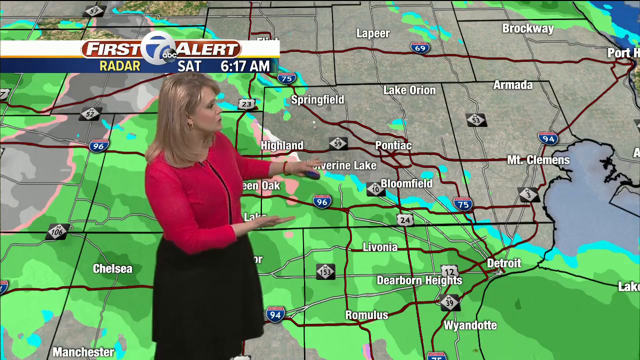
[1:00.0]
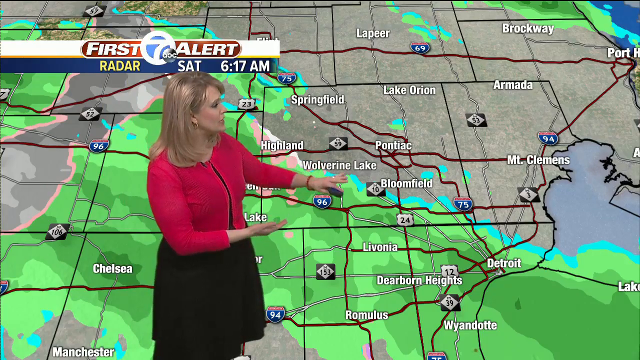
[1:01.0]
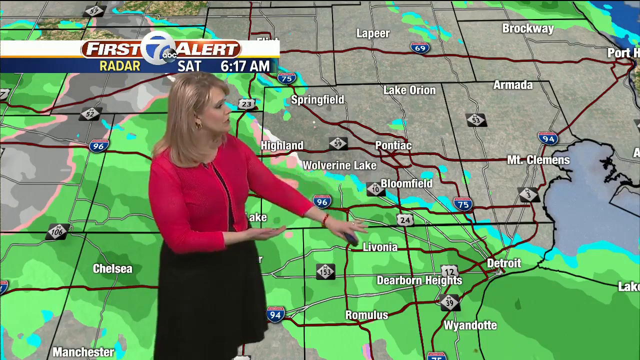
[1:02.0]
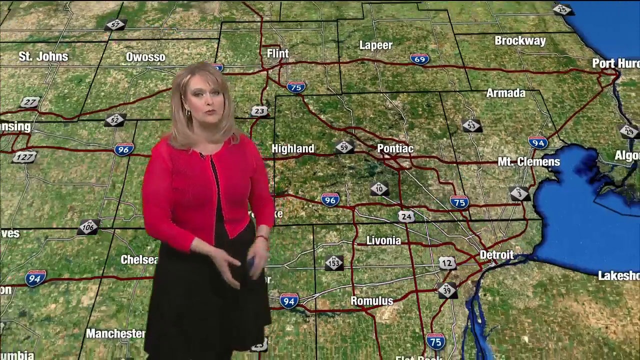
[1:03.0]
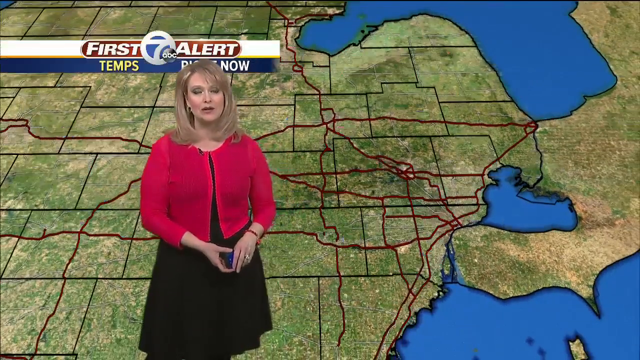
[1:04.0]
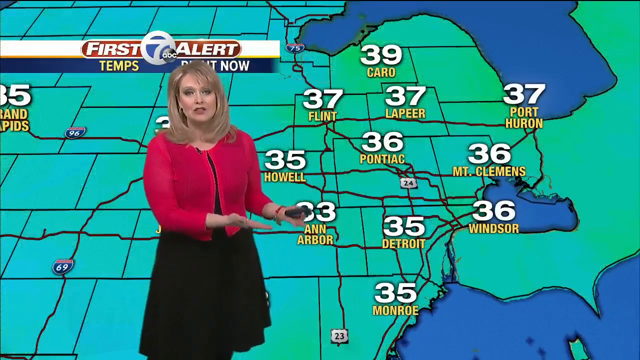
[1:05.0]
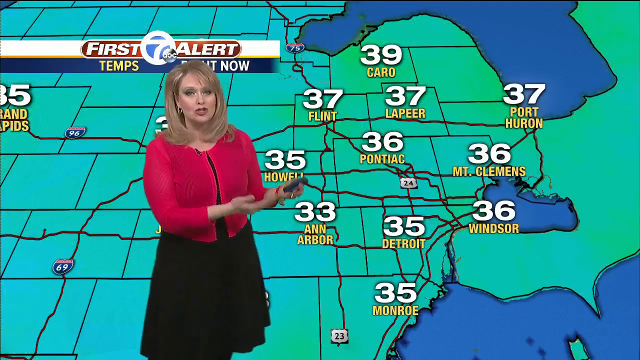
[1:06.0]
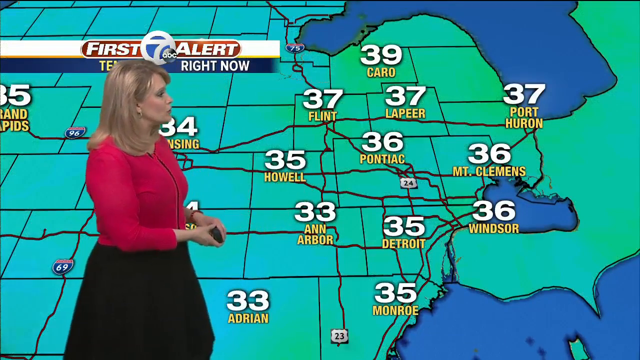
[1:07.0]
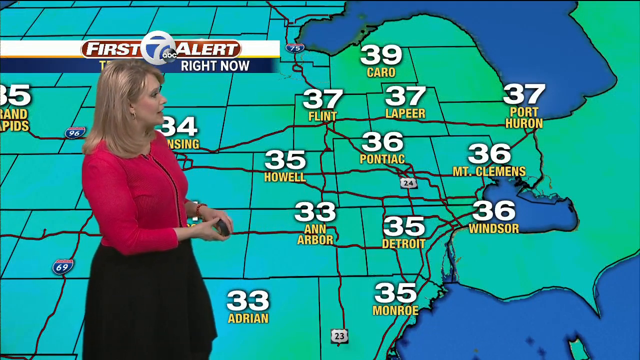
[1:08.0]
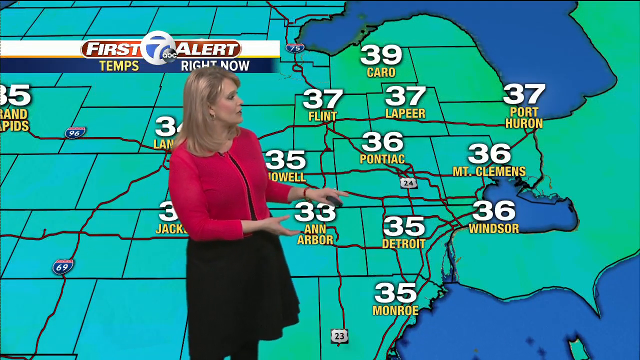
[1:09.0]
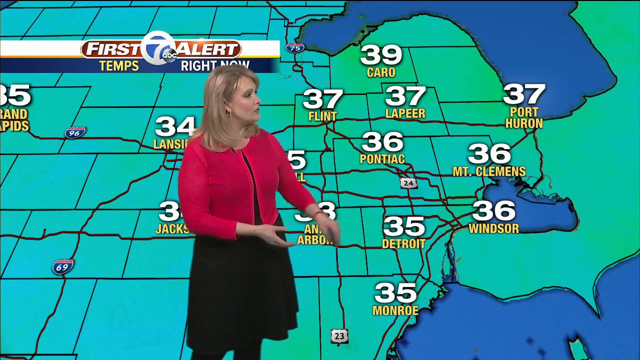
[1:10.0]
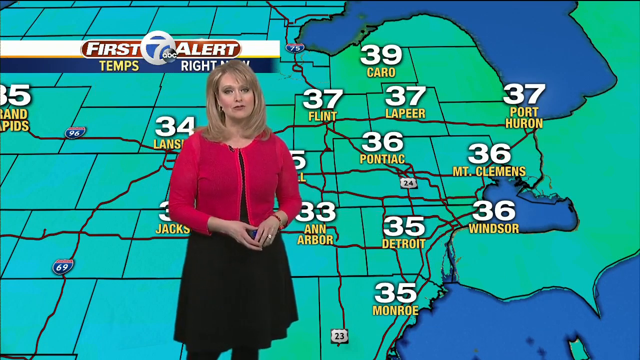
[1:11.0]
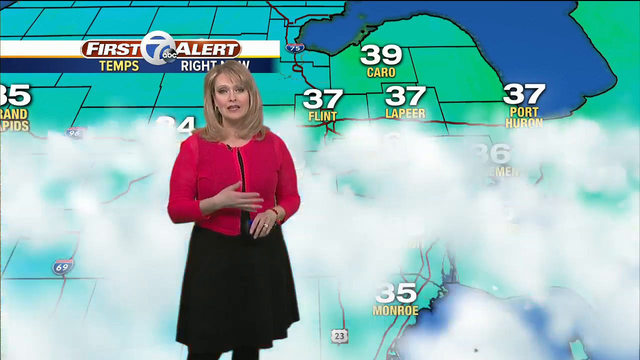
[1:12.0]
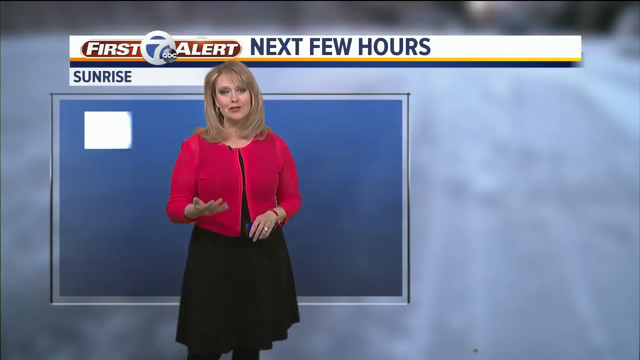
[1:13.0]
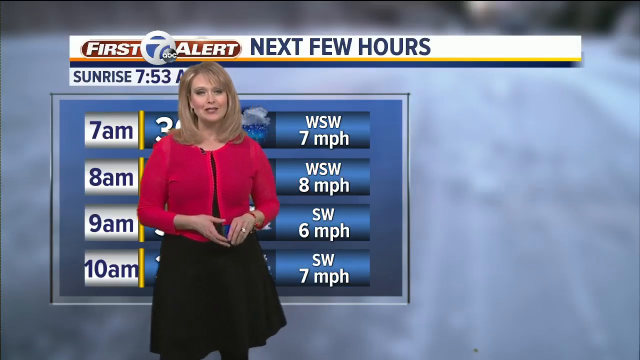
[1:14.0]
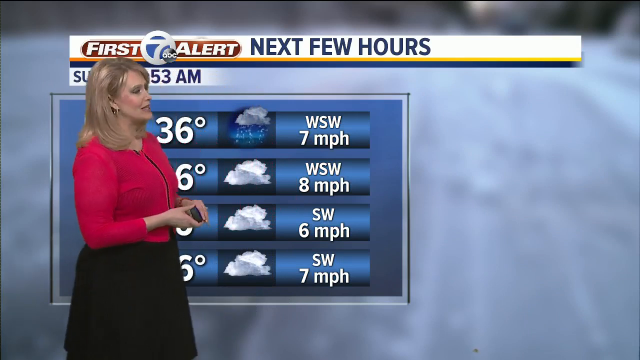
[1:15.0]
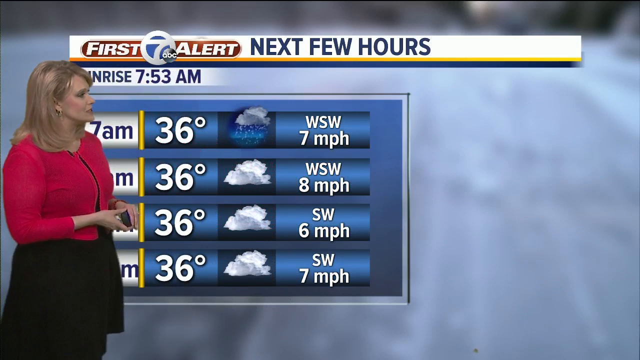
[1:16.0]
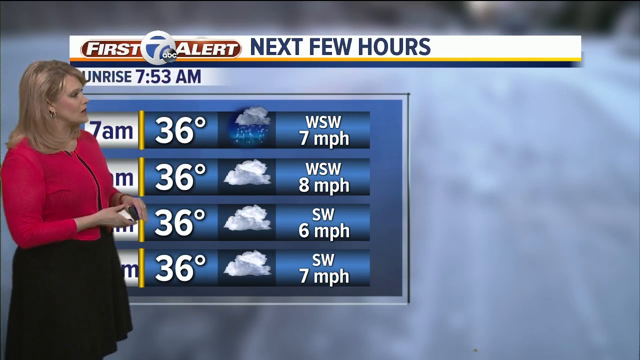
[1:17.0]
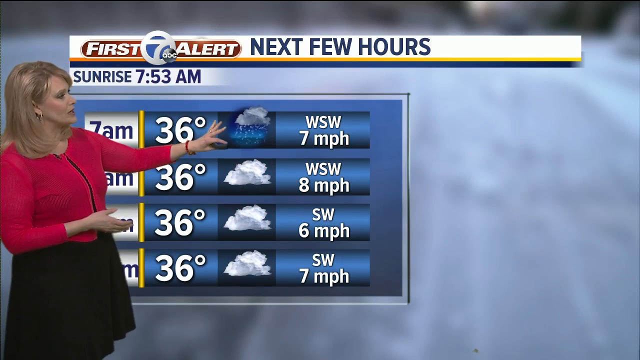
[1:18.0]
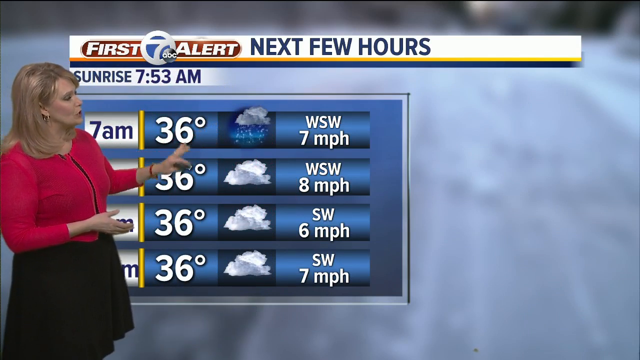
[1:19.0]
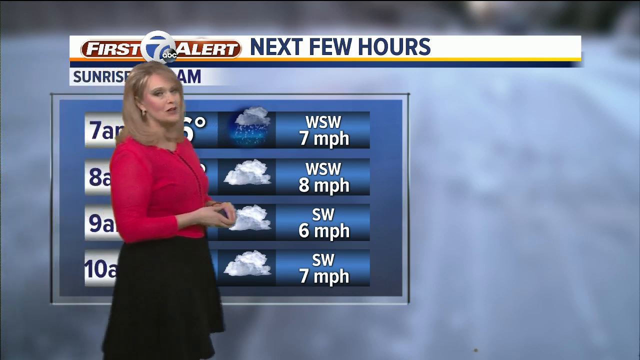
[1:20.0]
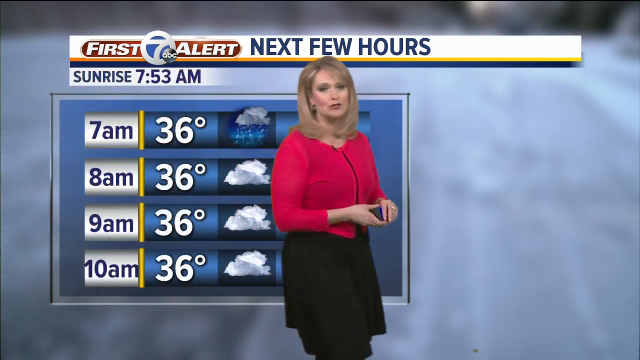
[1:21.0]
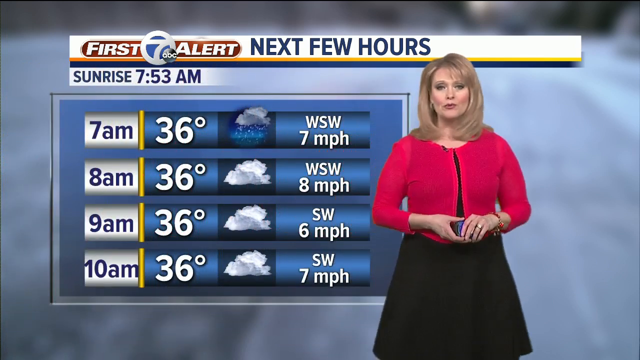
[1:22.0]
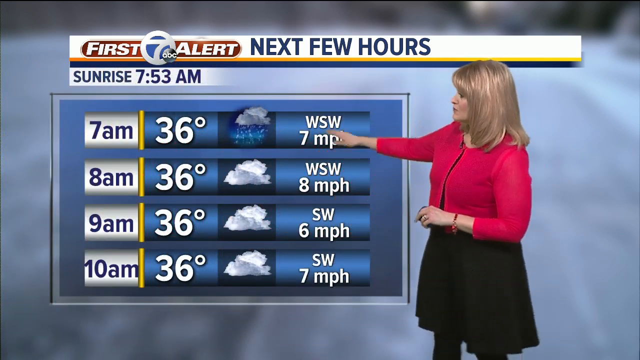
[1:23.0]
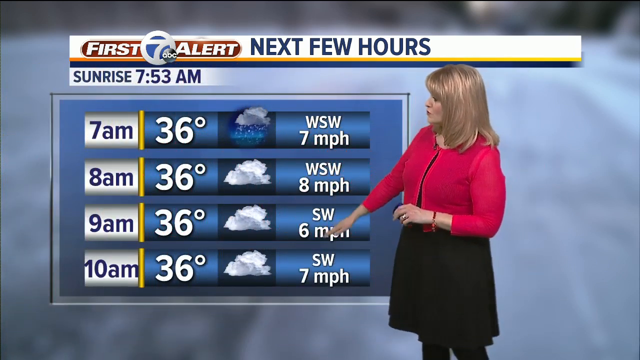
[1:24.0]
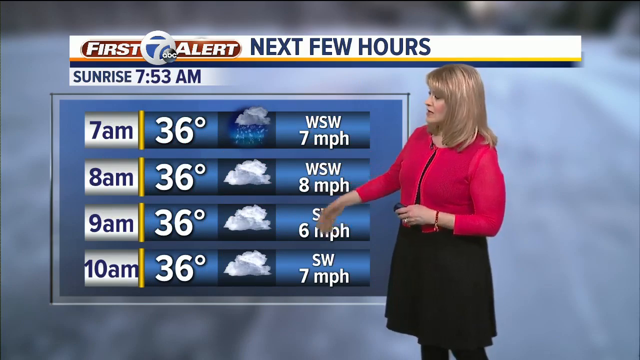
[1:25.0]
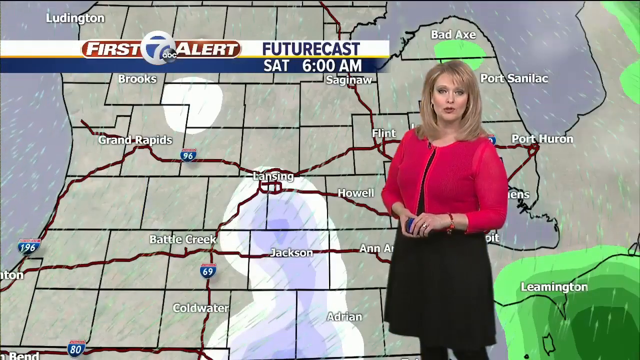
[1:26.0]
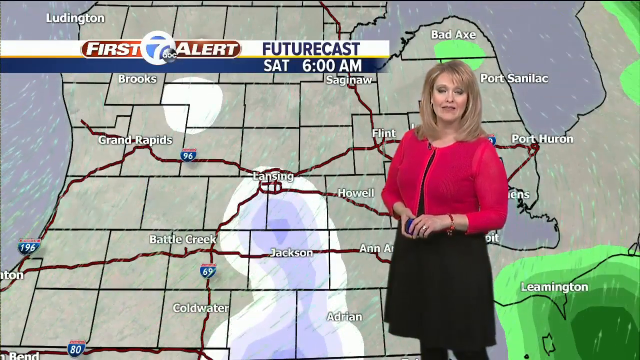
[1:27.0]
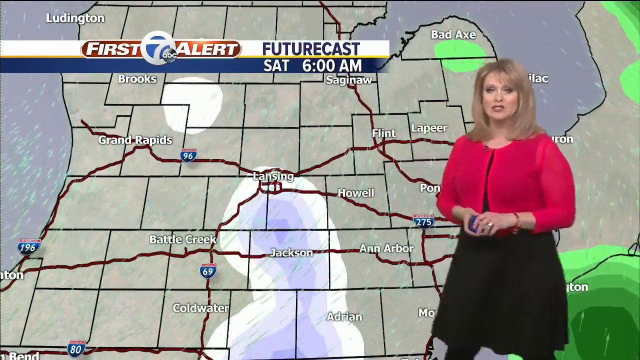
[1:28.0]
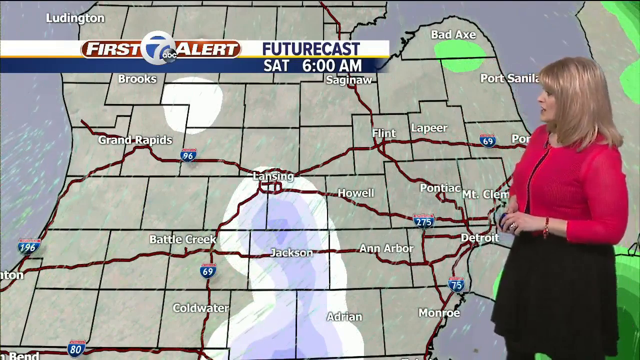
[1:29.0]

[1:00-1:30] The meteorologist points to different areas on the map, mostly ones highlighted in green. She then zooms out to show temperatures in different areas: Flint 37, Cairo 39, Lapeer 37, Pontiac 36, Ann Arbor 33, Detroit 35, Monroe 35, Windsor 36, Mount Clements 36 and Point Huron 37. The temperatures seem close together across these areas.